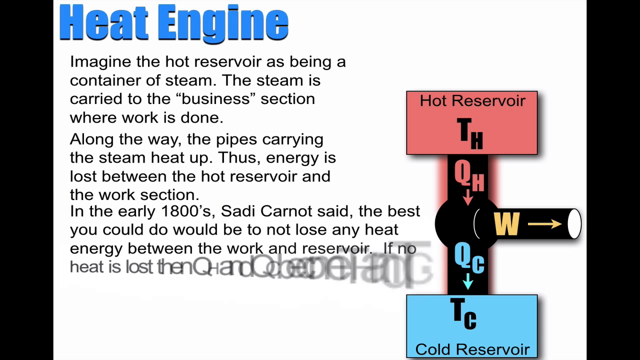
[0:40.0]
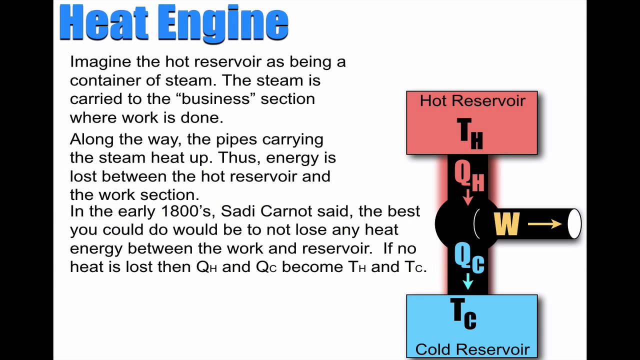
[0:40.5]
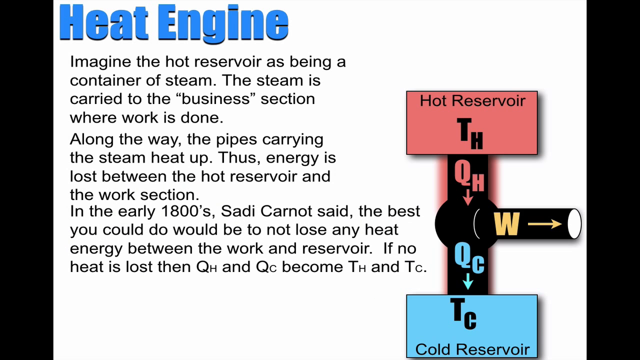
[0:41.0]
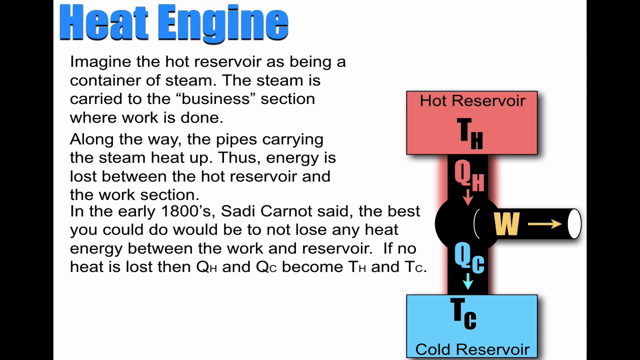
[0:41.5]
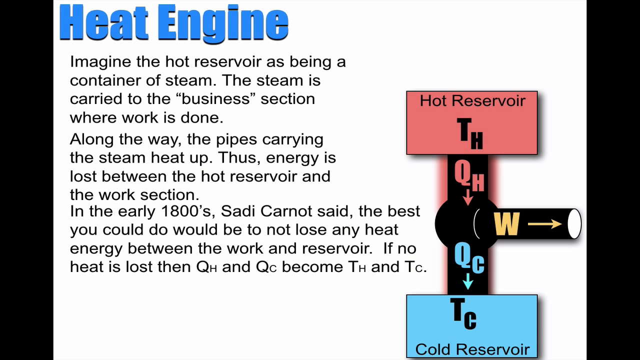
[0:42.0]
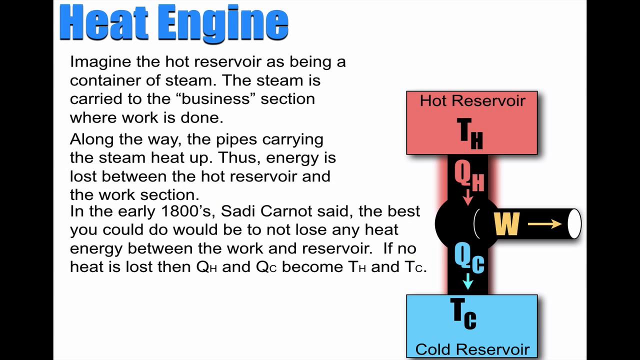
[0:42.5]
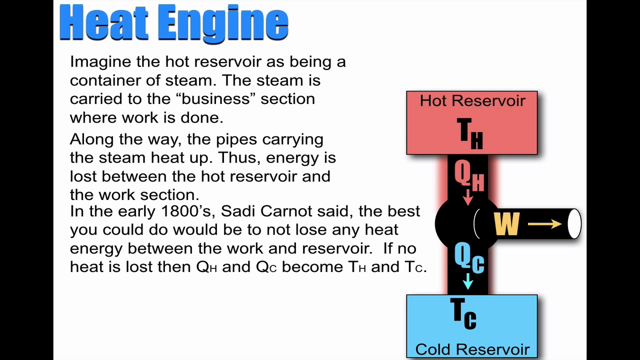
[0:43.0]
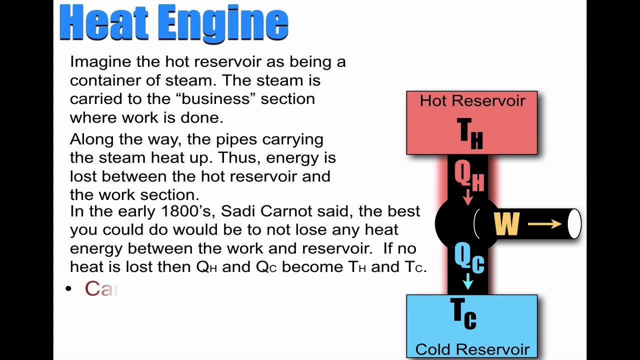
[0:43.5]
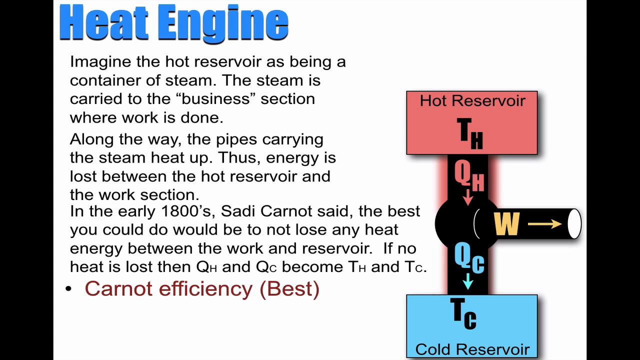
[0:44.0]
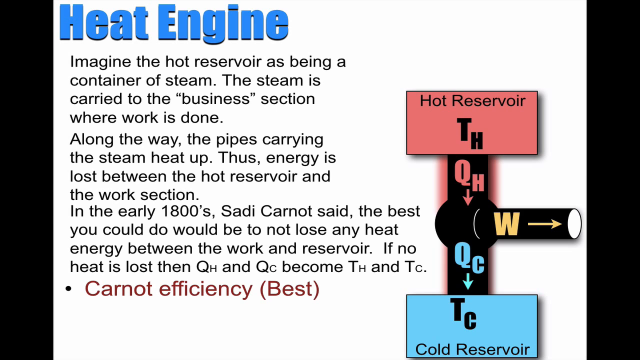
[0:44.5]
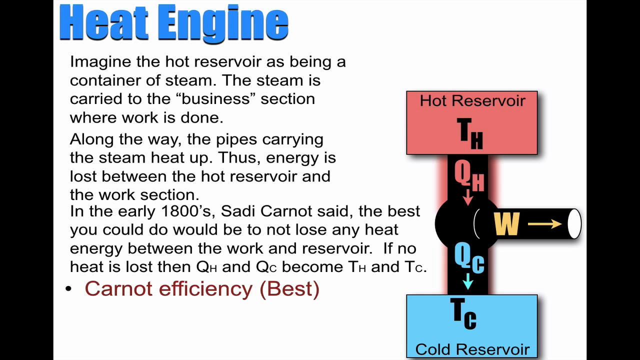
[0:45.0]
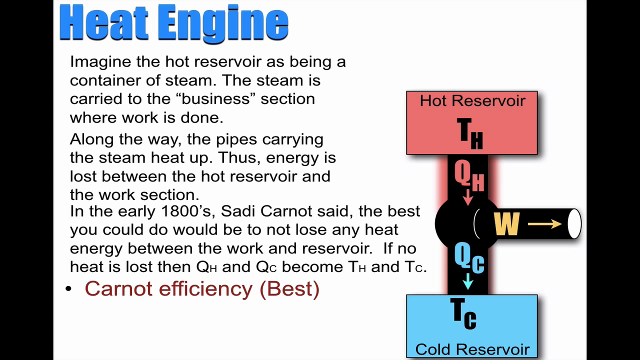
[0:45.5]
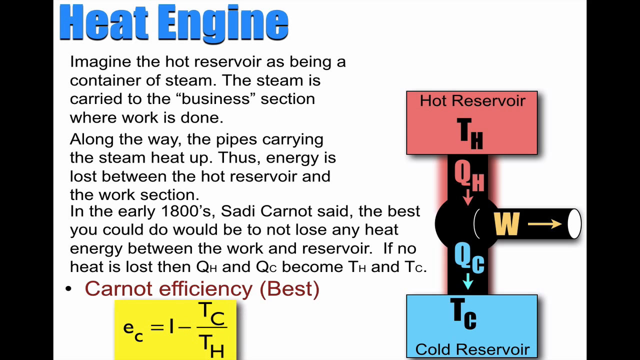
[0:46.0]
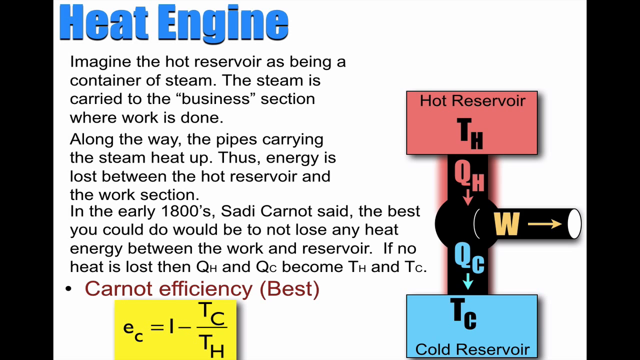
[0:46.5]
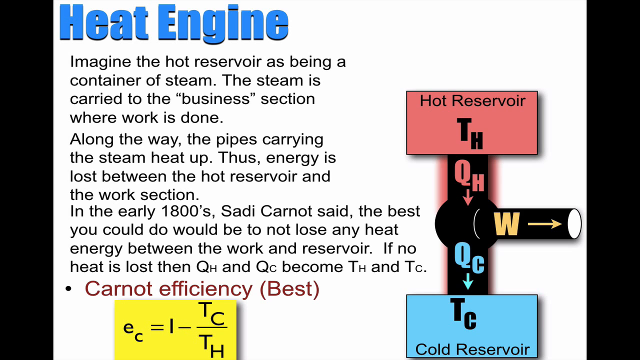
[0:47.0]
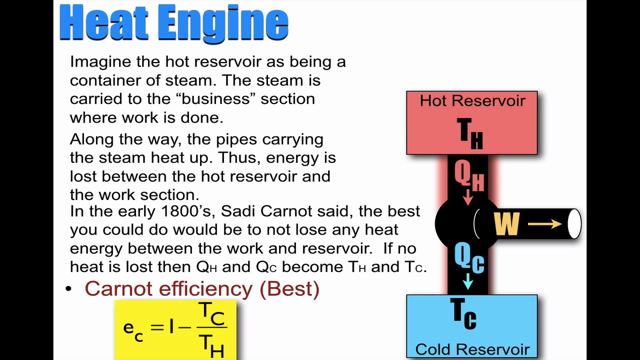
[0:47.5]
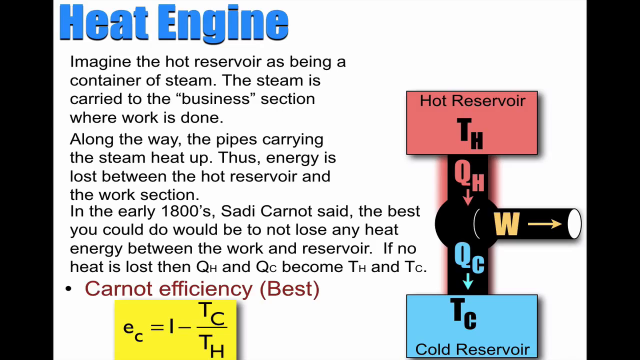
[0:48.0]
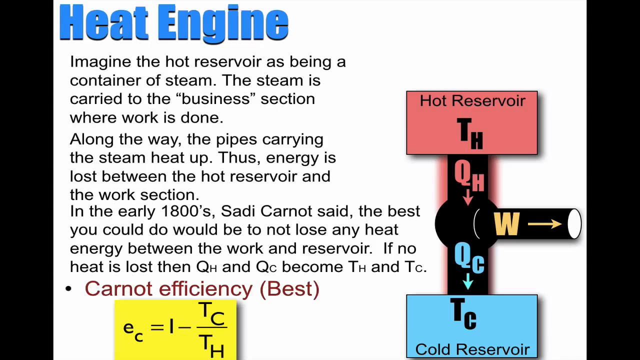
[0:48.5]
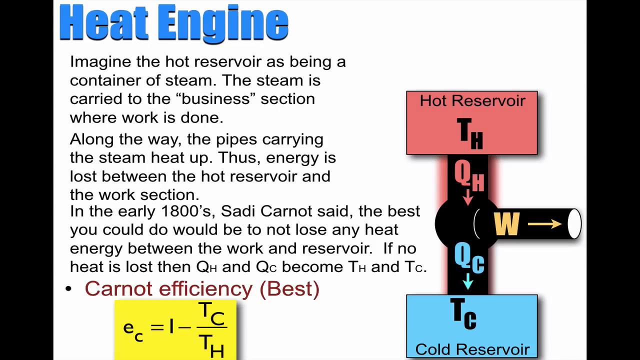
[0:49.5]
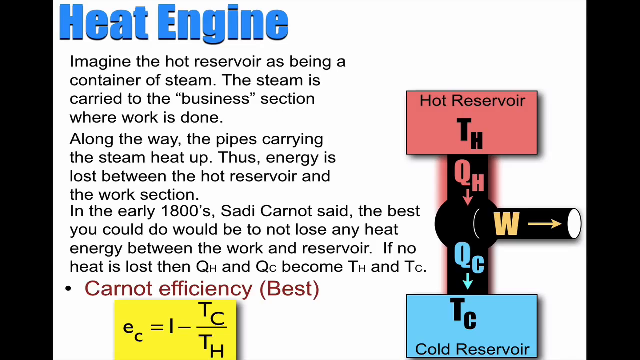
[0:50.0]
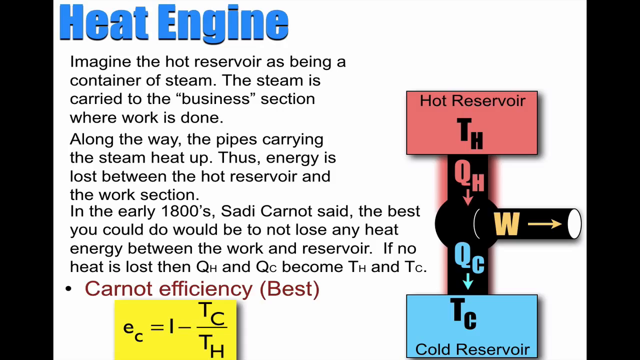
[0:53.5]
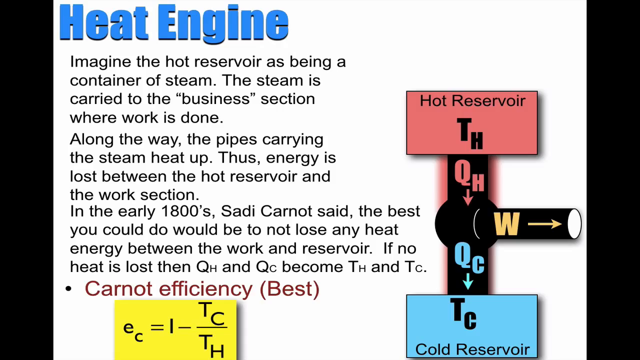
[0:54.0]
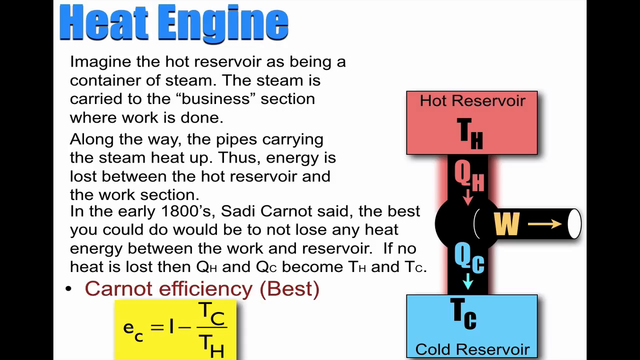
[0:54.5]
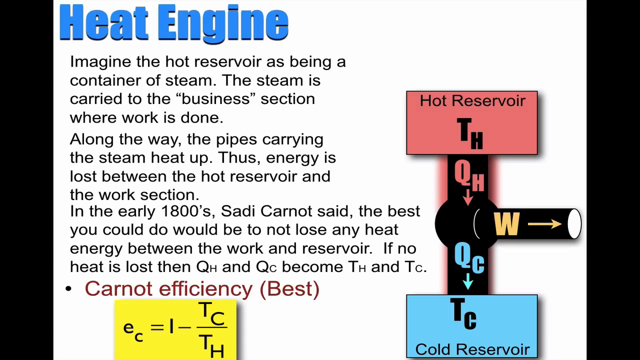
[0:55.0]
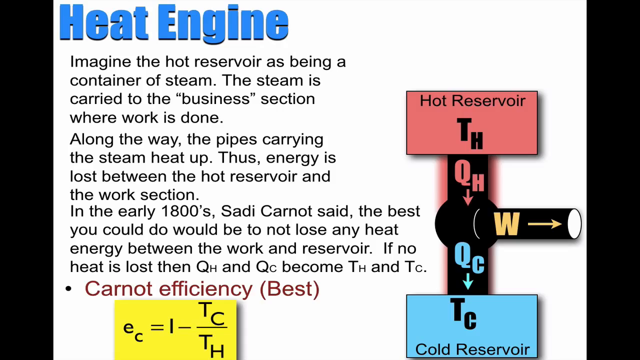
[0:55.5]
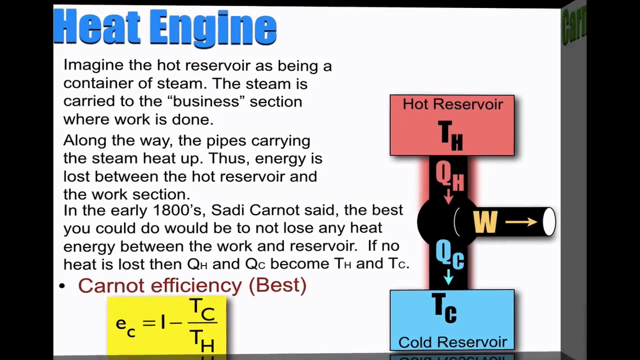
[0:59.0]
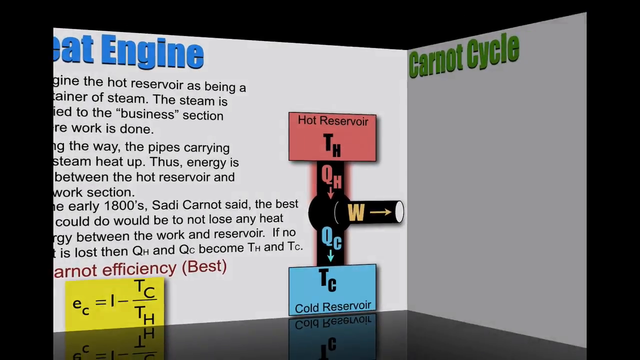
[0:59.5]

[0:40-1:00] The bottom pipe, marked "QC" with an arrow pointing to the blue container at the bottom, also shows some color on the outside of its edges, though less than on the hot reservoir area. More text drops in under the previous two paragraphs: "in the early 1800's, Sadi Carnot said, the best you could do would be to not lose any heat energy between the work and the reservoir." and "If no heat is lost, then QH and QC become TH and TC." Below that, a bullet point drops in reading "Carnot efficiency (best)", and below that an equation: EC equals I minus TC over TH. Then the screen seems to spin out, as if it were a card turned on its side to face the front, and a blank white screen takes its place with "Carnot cycle" appearing at the top.